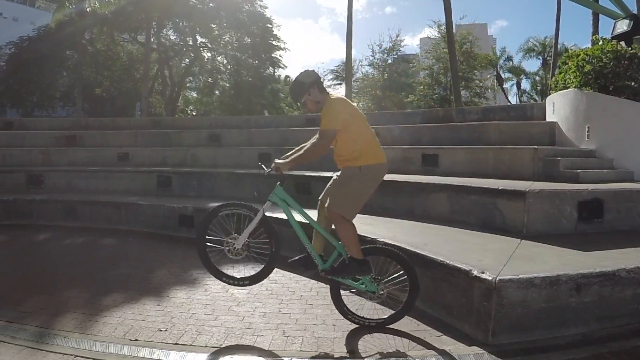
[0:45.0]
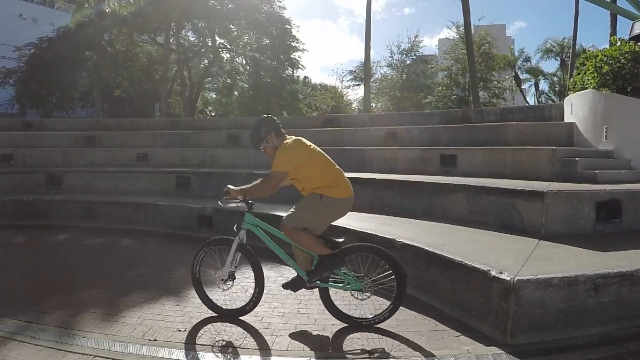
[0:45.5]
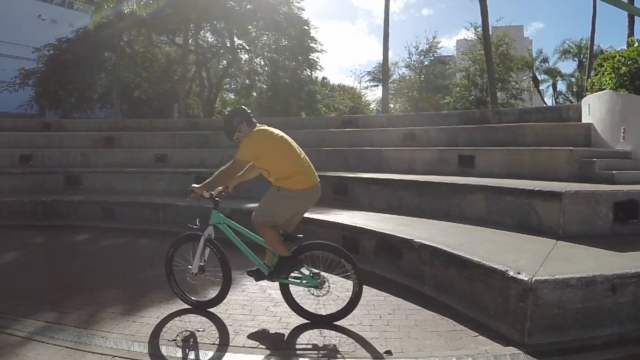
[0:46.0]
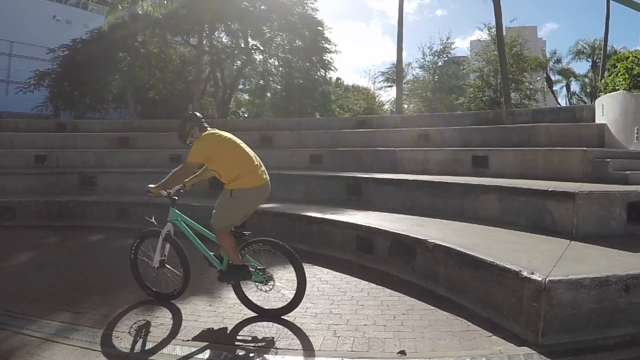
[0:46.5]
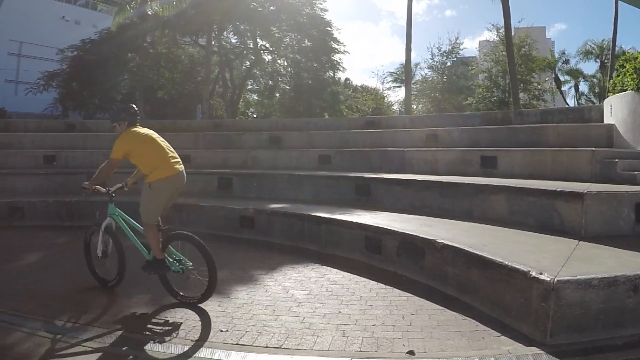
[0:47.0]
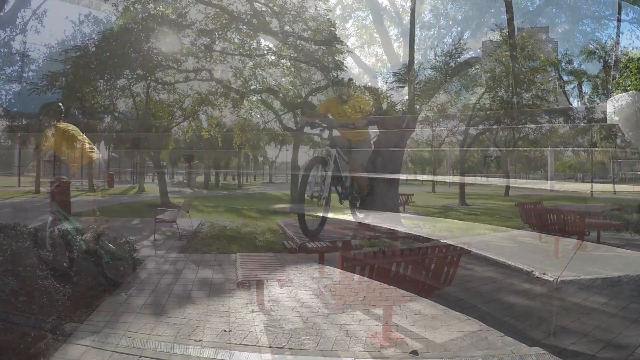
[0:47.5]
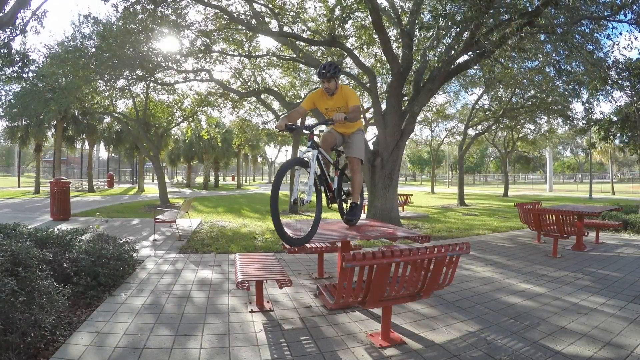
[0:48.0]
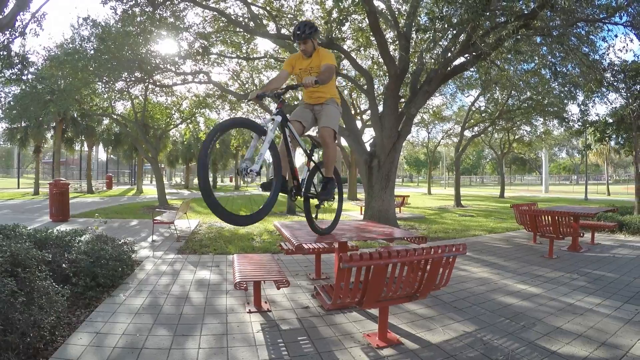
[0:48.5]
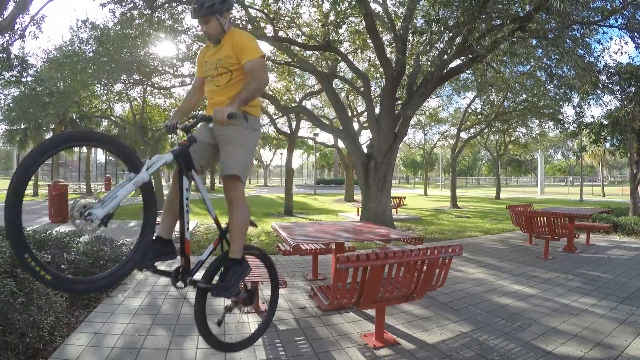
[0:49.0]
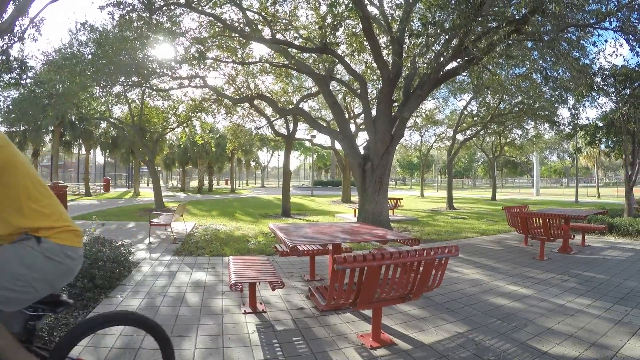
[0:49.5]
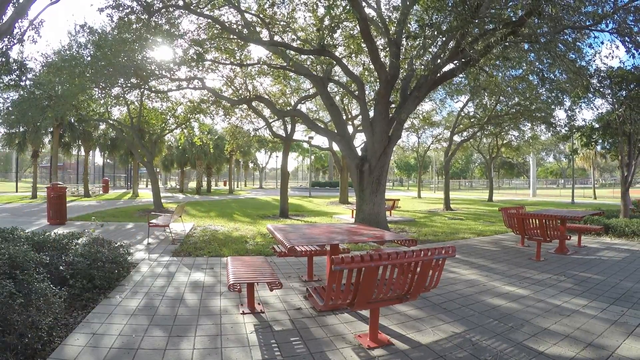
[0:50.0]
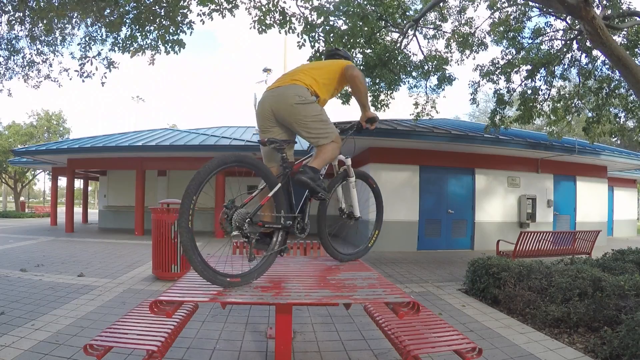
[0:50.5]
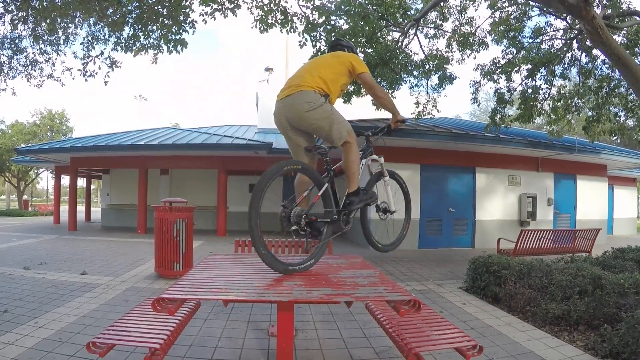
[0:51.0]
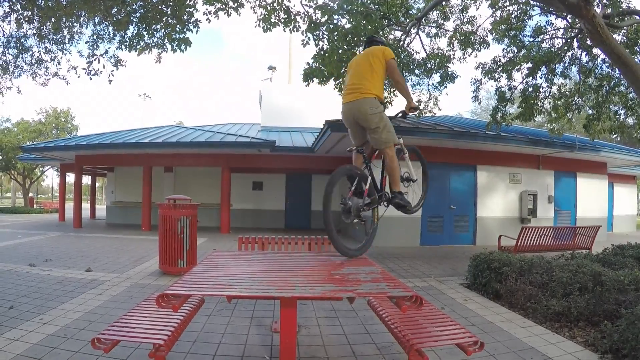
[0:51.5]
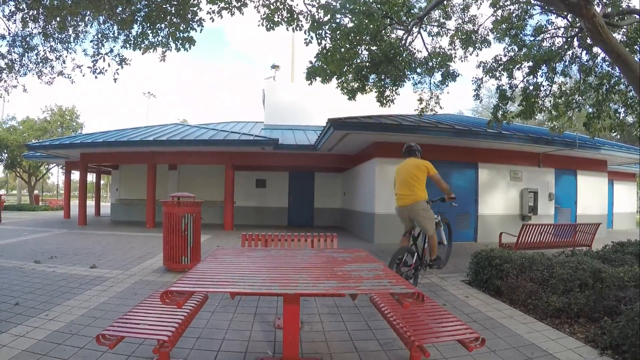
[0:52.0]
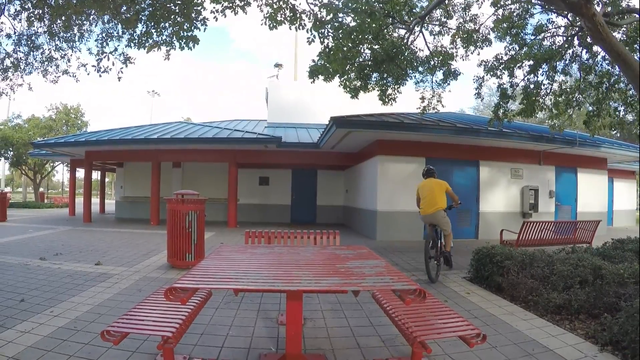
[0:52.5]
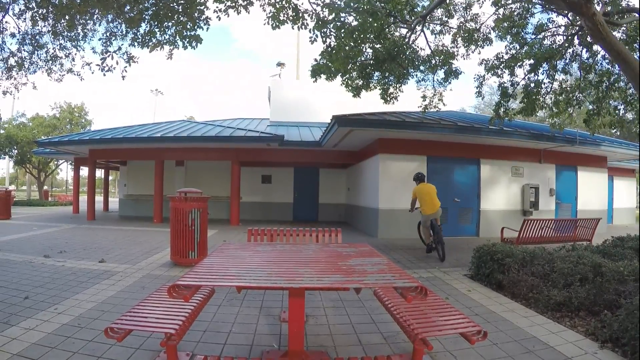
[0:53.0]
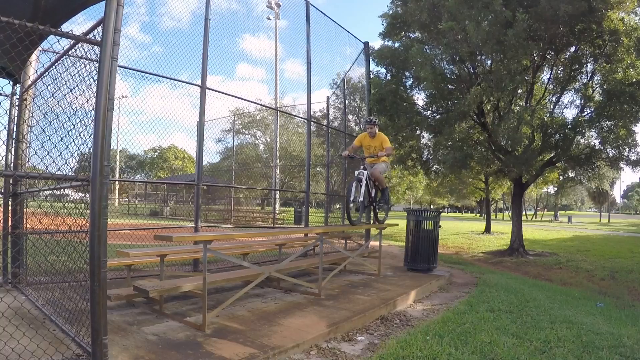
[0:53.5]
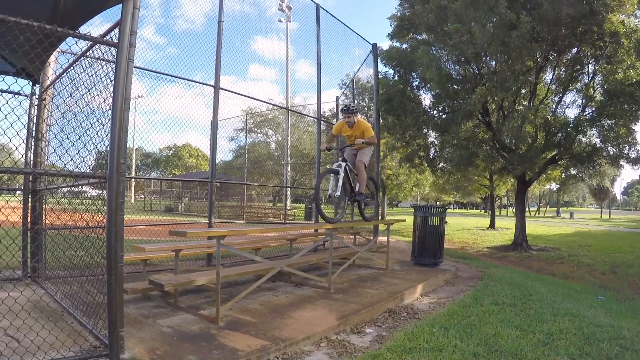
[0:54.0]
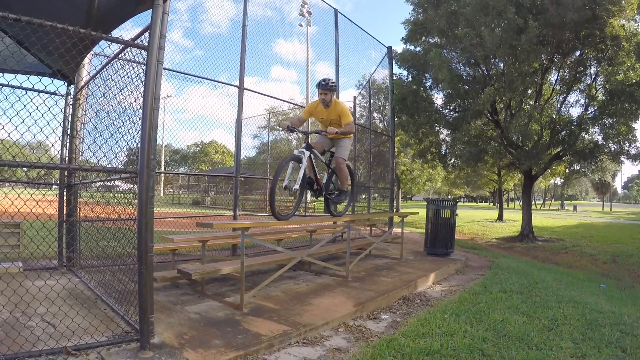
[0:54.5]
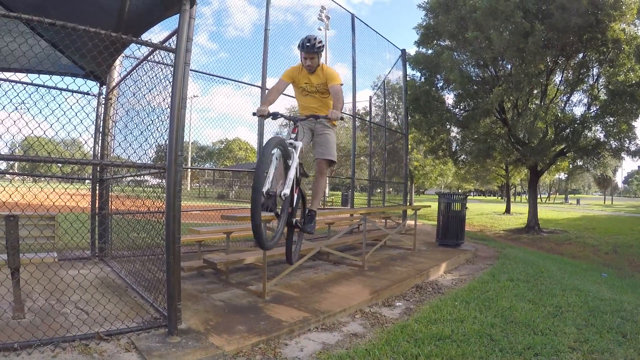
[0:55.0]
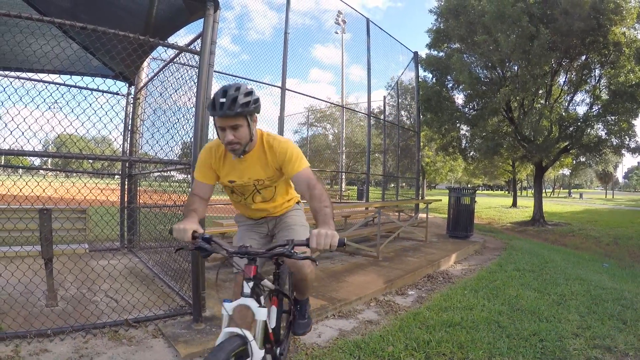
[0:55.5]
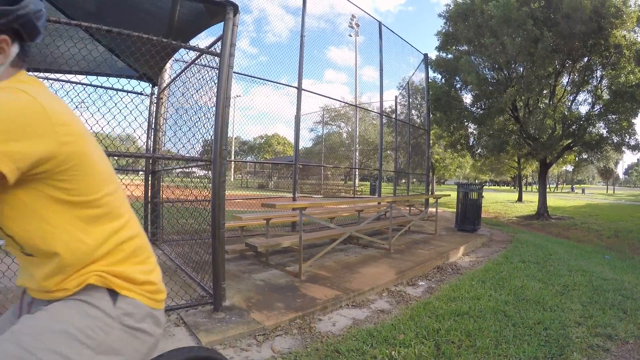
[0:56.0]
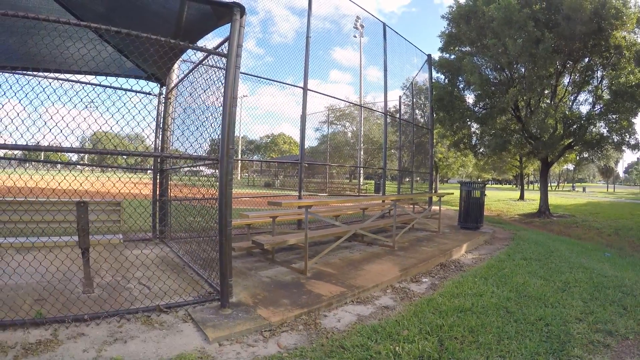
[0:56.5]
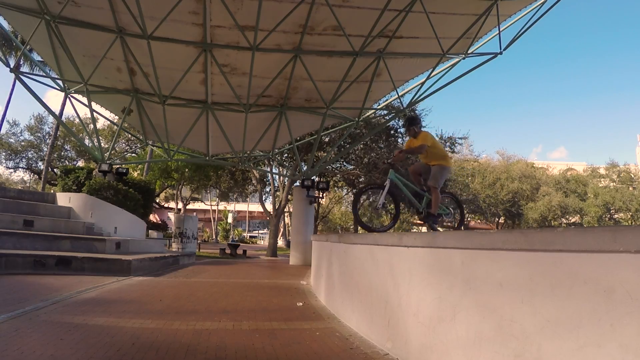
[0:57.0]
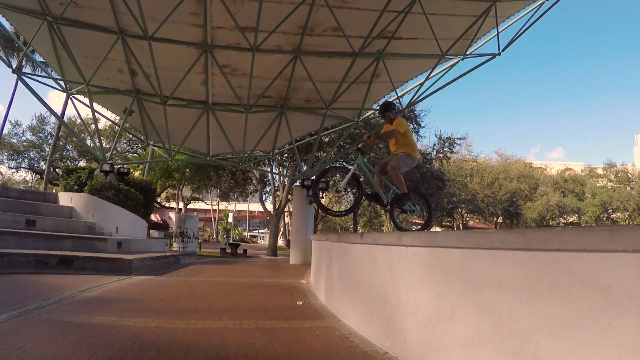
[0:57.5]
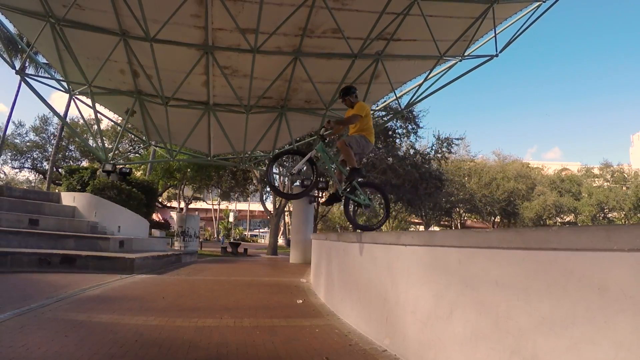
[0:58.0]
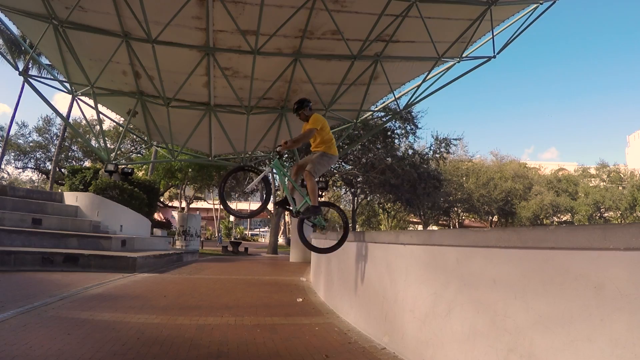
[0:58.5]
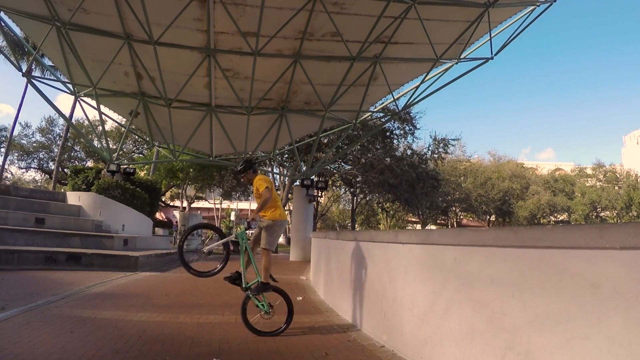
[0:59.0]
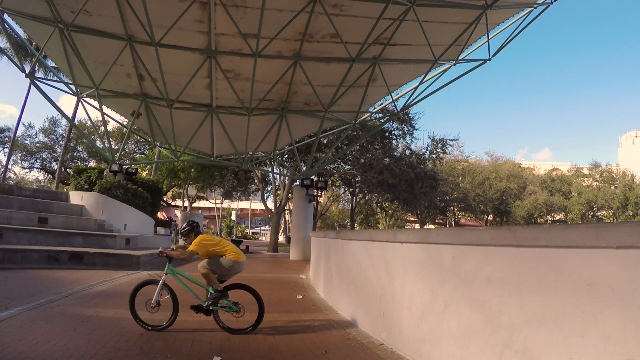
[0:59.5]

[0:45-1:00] A montage shows a man on a bicycle, wearing a yellow t-shirt and a black safety helmet, jumping off various objects onto the ground and landing safely to continue on his path. First, in slow motion, he jumps from concrete steps outdoors. Next, he jumps off a red picnic table, shown from two different views. He also traverses an outdoor bench in what is apparently a sports park area, with possibly a baseball field in the background. In another short shot, he jumps from a large concrete wall onto the ground; the wall appears to be approximately 4 to 6 feet high.